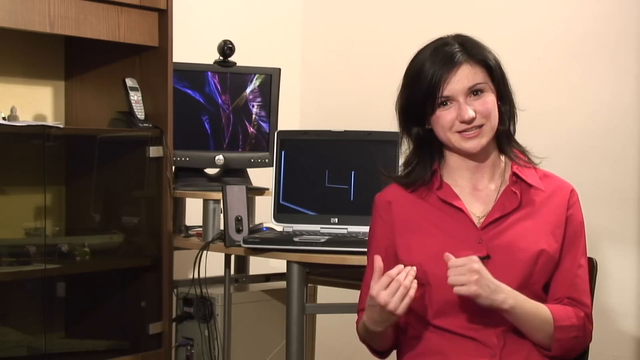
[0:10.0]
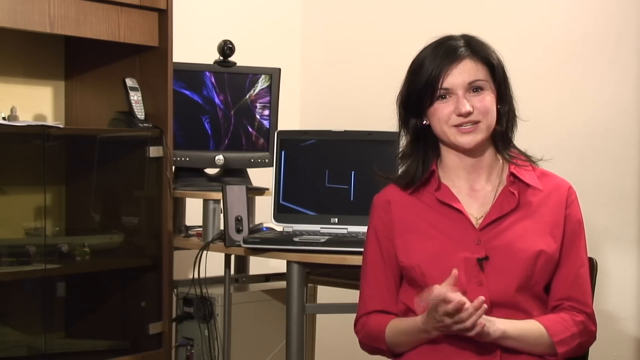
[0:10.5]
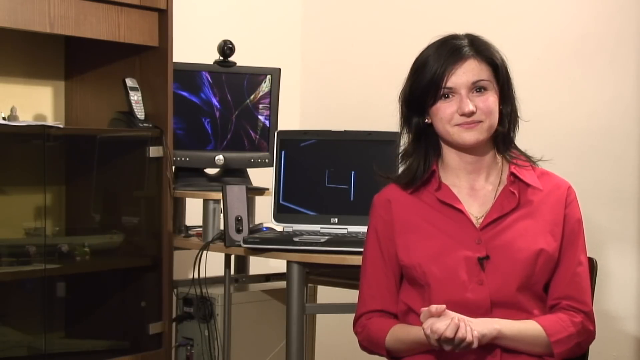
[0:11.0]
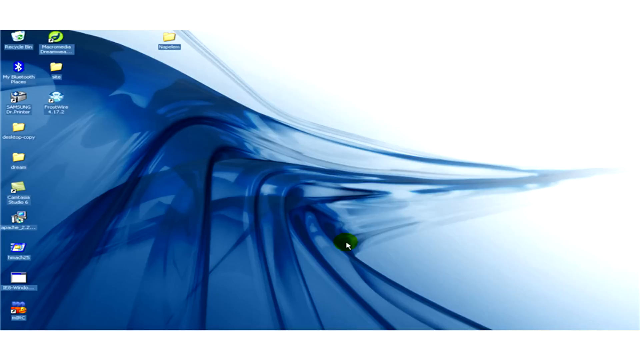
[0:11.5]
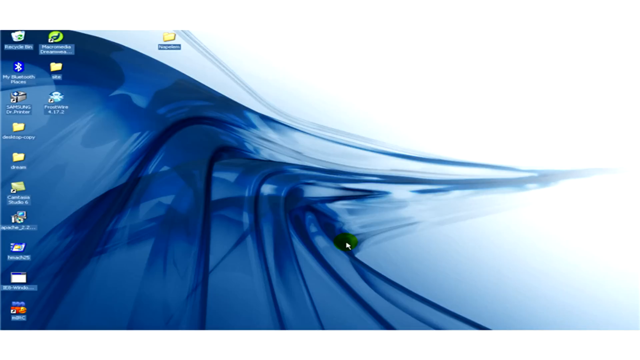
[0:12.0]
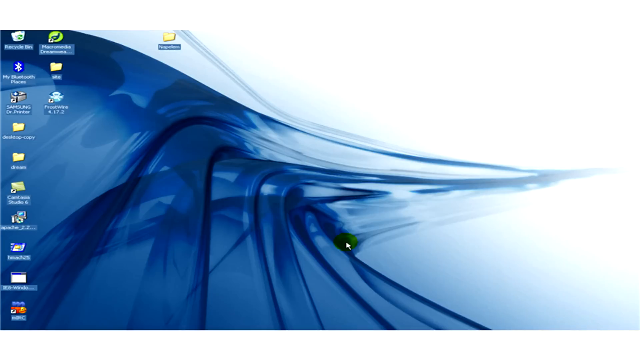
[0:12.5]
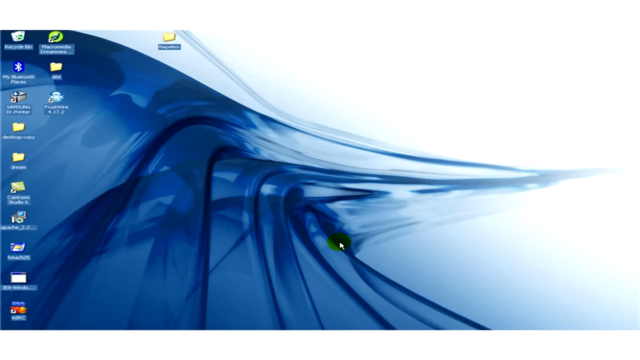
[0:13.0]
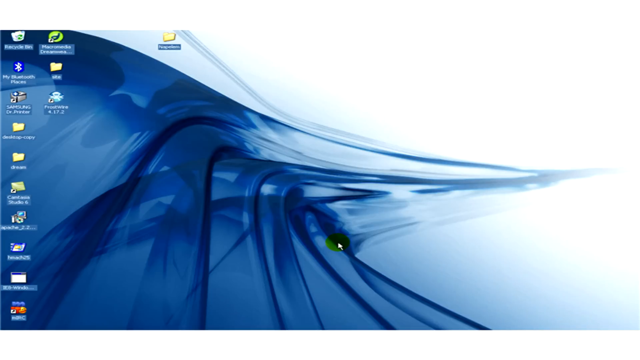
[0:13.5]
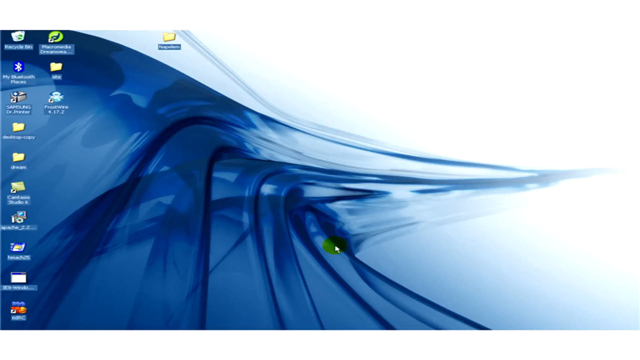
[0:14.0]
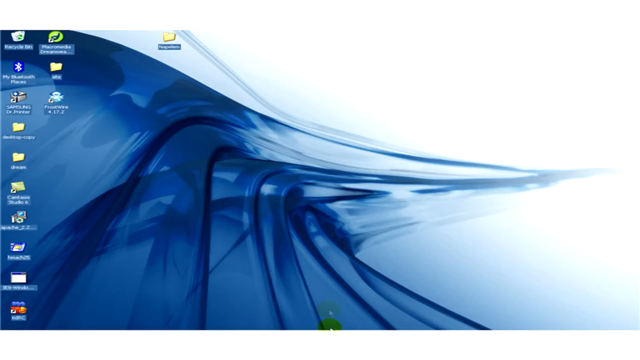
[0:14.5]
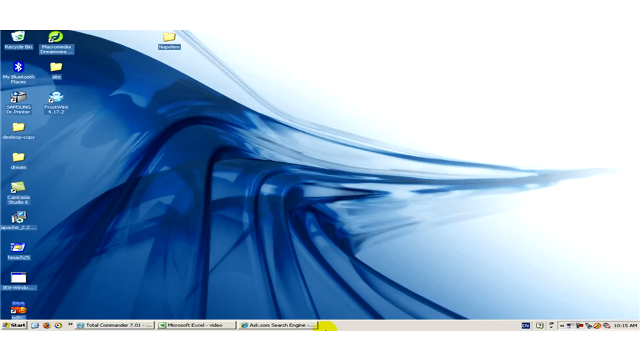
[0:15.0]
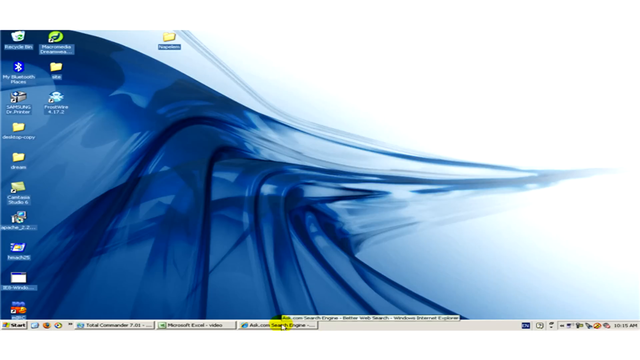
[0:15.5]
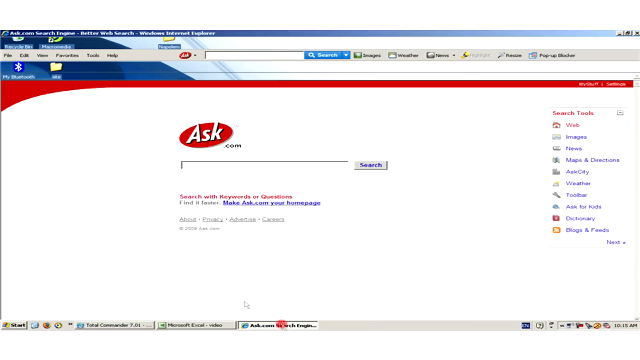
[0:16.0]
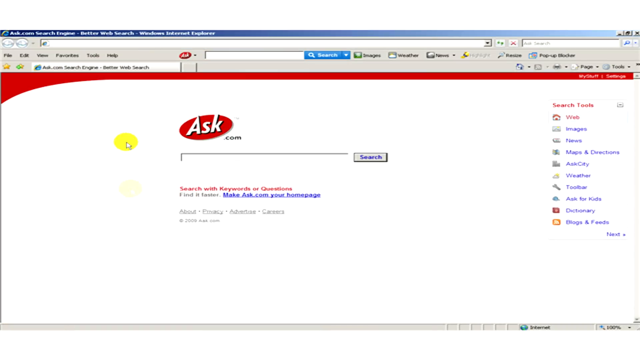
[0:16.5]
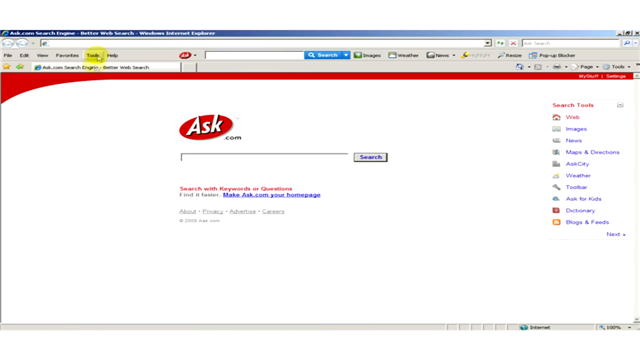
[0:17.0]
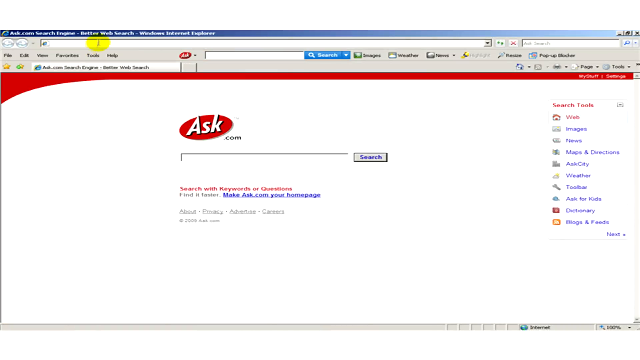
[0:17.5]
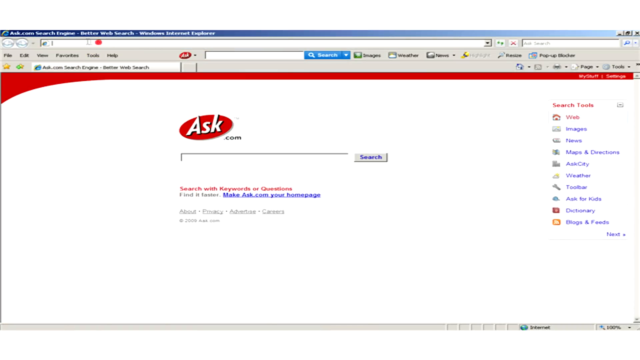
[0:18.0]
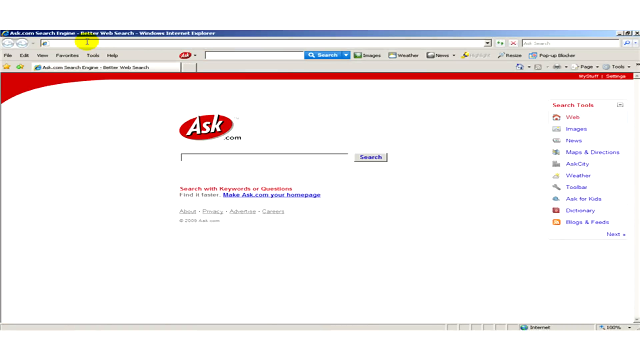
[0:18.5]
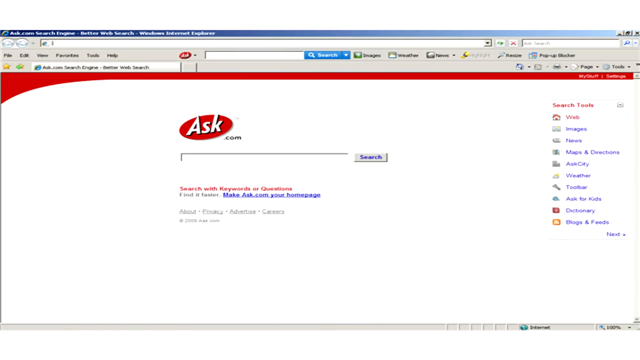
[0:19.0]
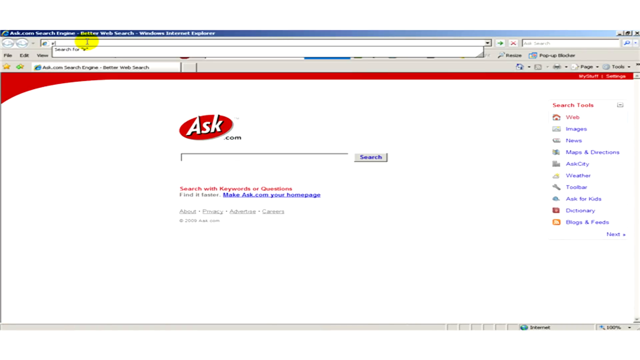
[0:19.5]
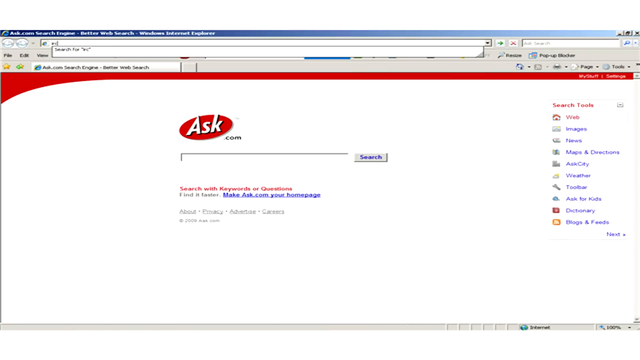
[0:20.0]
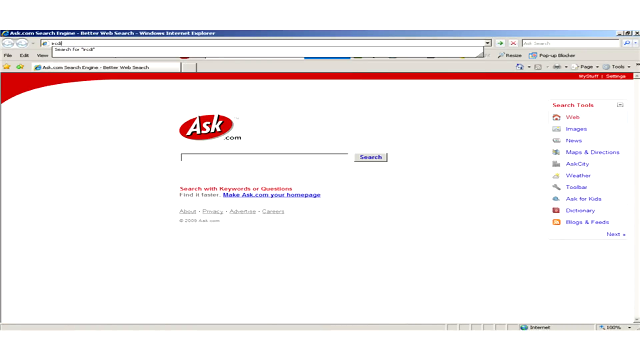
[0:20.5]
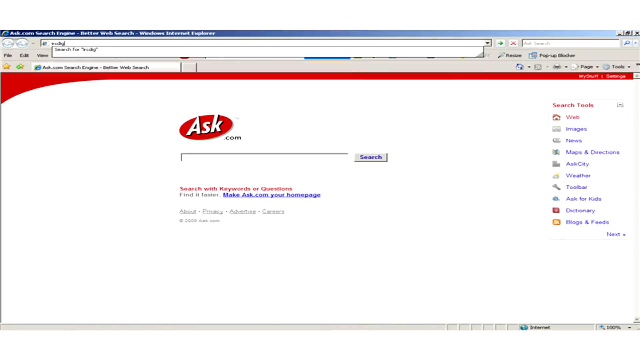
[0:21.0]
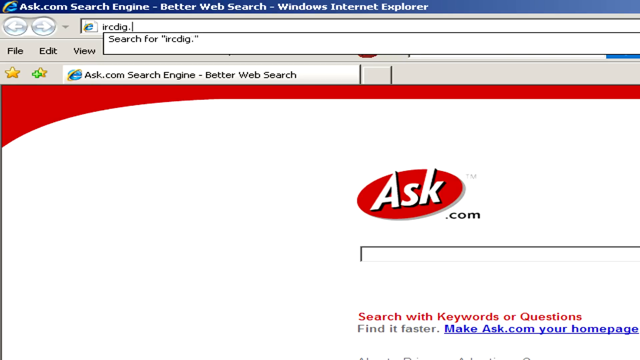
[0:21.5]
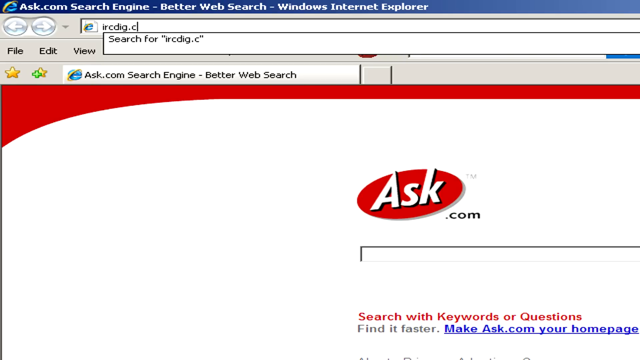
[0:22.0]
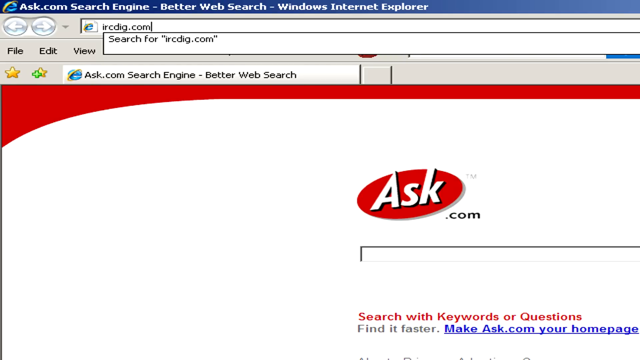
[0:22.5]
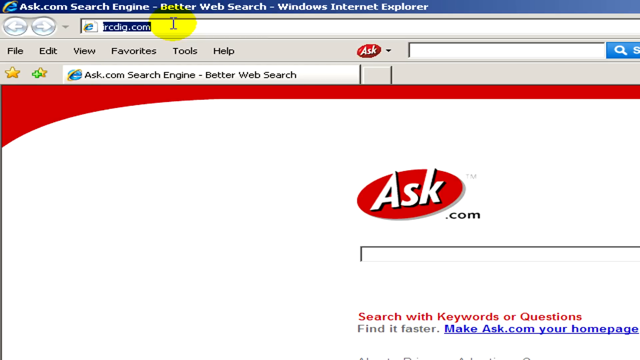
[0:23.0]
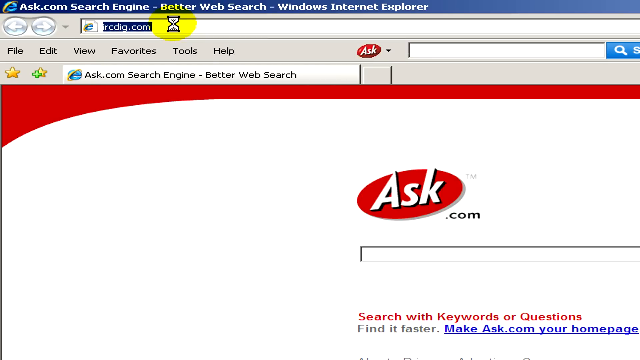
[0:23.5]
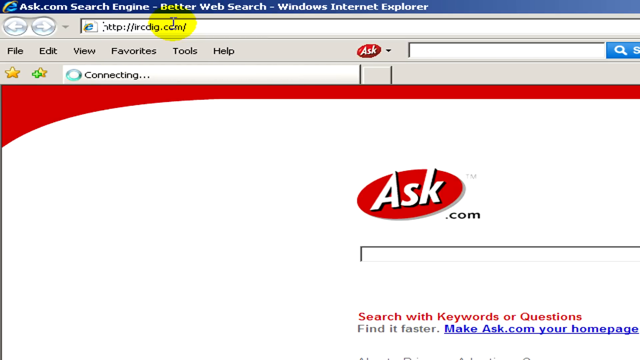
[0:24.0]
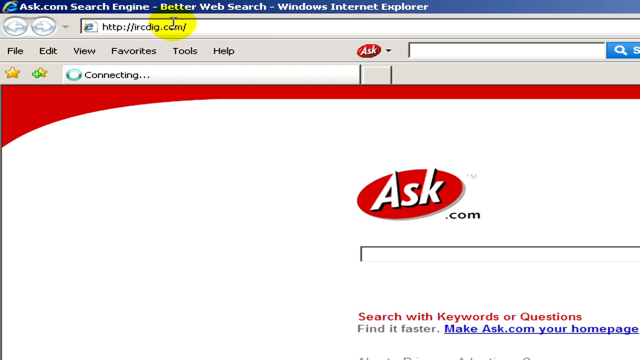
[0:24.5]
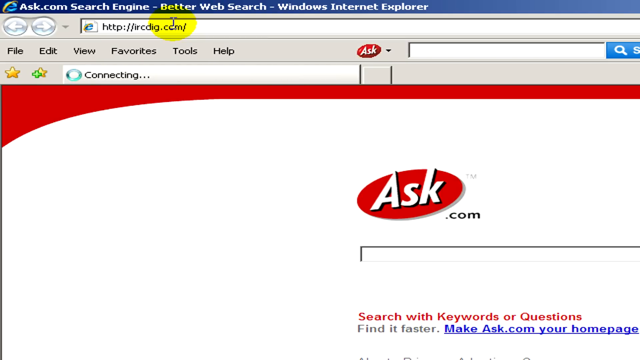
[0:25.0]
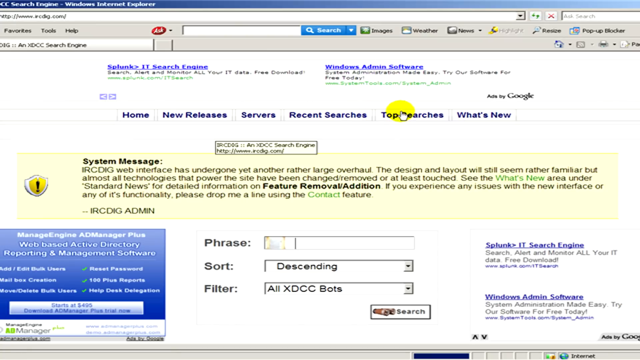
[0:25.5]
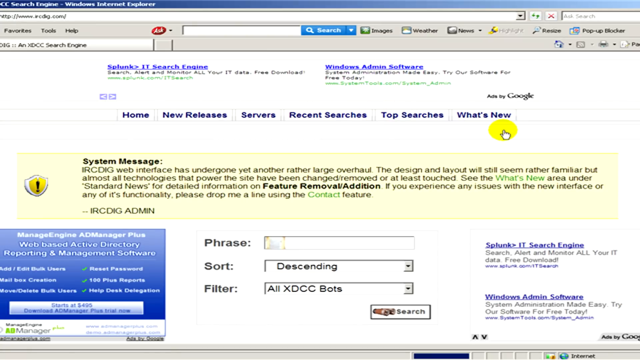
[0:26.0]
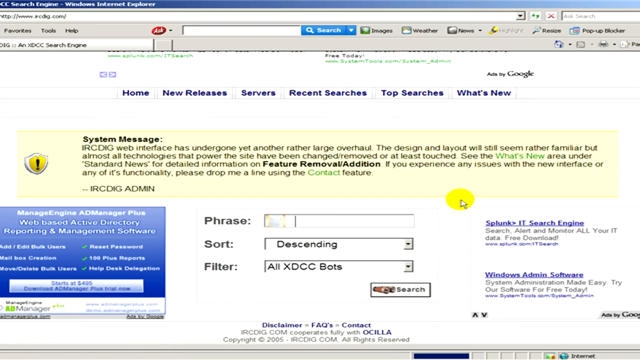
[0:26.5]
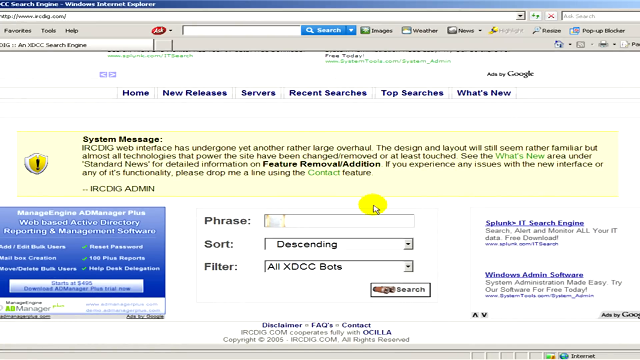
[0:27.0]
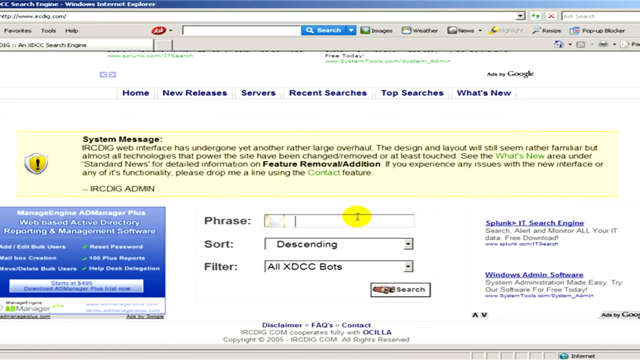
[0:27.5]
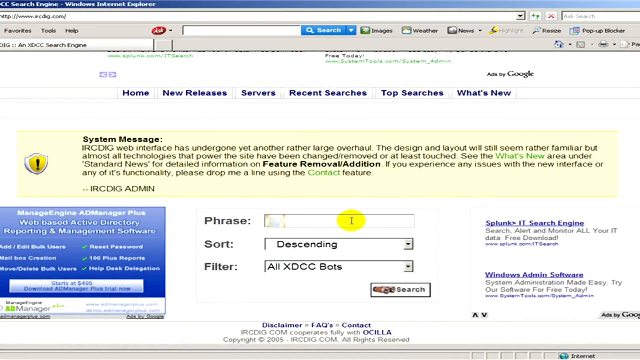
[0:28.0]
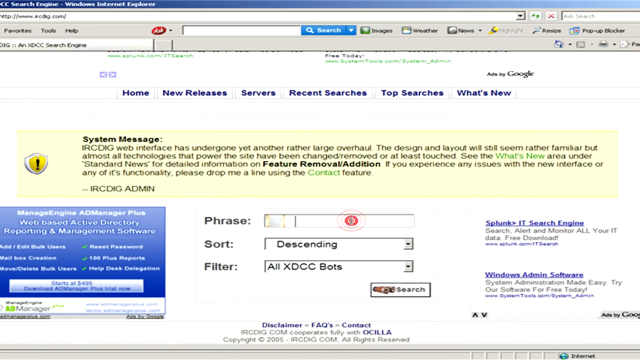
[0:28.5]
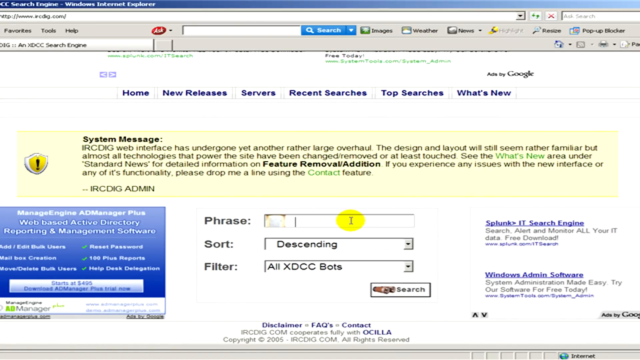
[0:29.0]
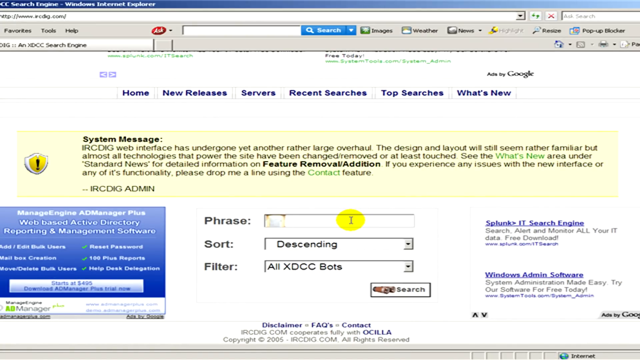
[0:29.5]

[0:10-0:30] The woman in the red blouse has black hair, pale skin and a fair complexion, and wears some jewelry around her neck. The video quickly shifts to the homepage of what looks like an old PC, maybe from around the year 2000, with a number of folders shown. The search engine ask.com is opened, and at the top of the page a URL is entered rather than a search being performed. At first the URL is hard to read, but the camera zooms in a little closer, showing the website entered as ircdig.com. The ircdig.com webpage then loads, showing some search boxes. The cursor briefly enters the phrase search box, but nothing is typed into it before the video ends.